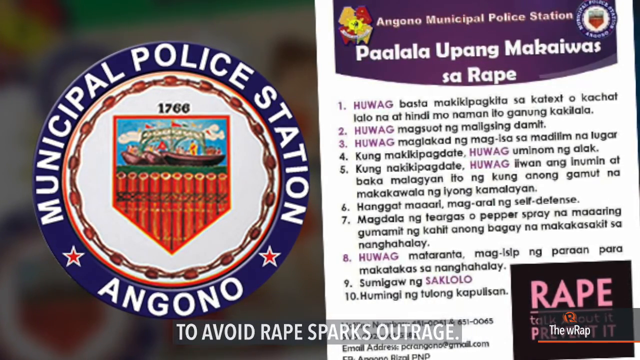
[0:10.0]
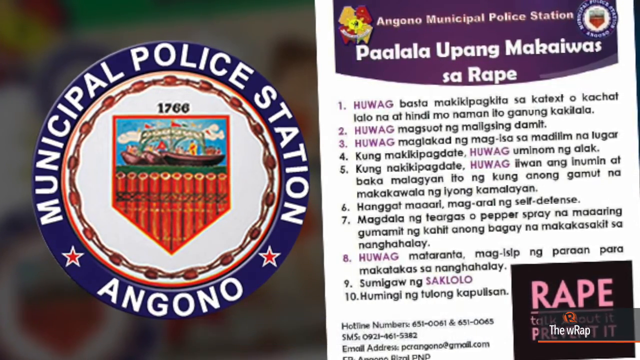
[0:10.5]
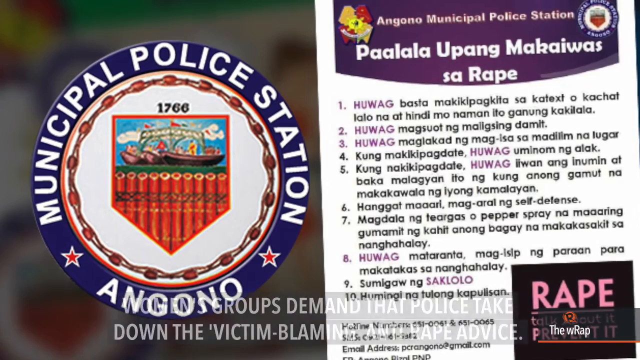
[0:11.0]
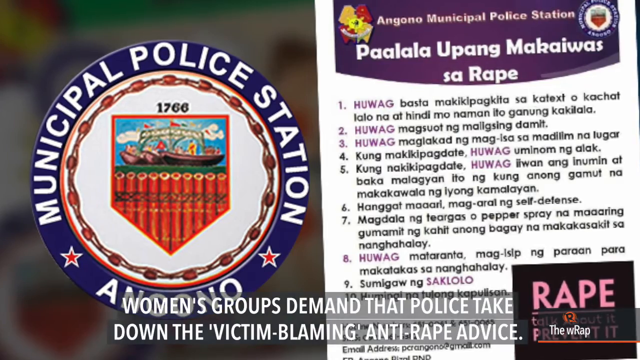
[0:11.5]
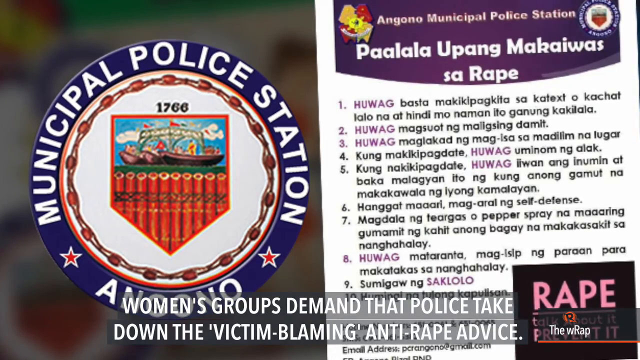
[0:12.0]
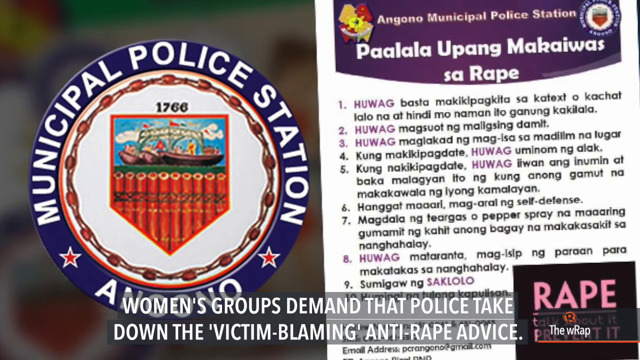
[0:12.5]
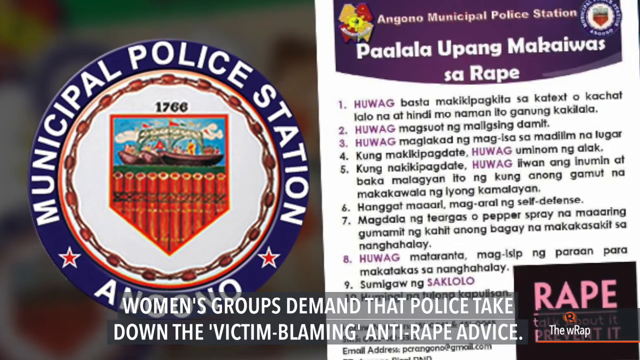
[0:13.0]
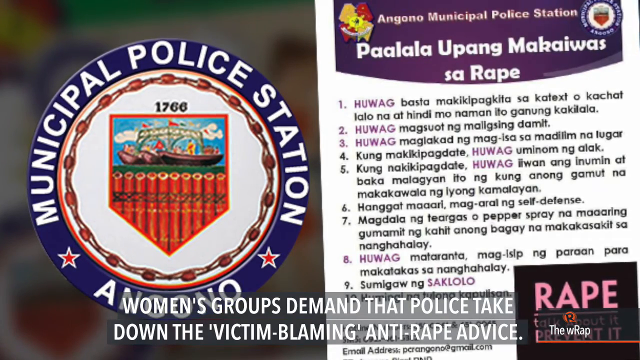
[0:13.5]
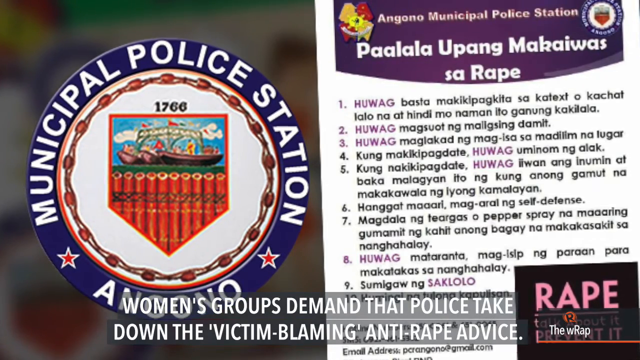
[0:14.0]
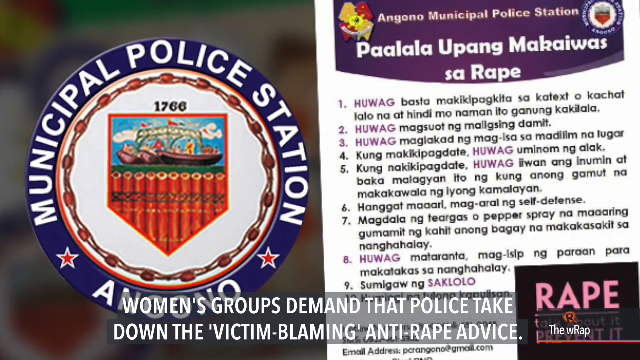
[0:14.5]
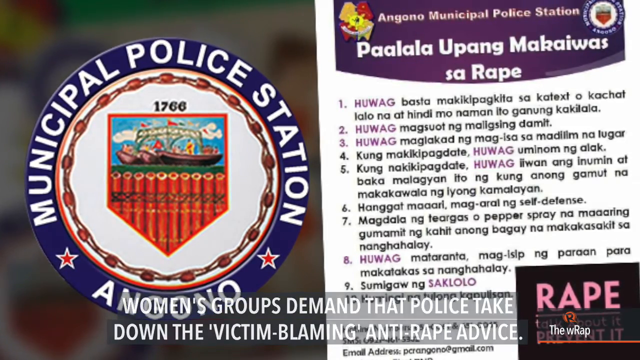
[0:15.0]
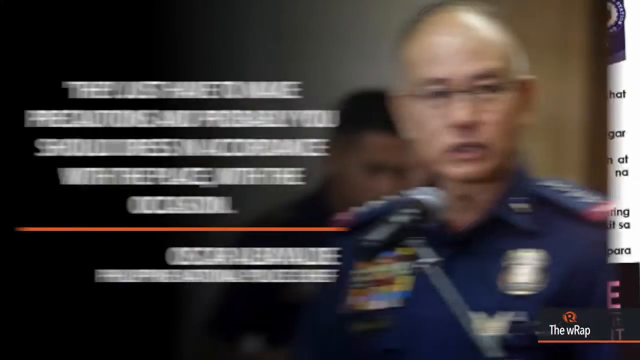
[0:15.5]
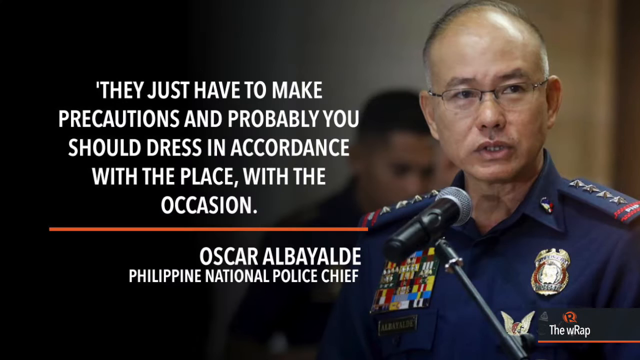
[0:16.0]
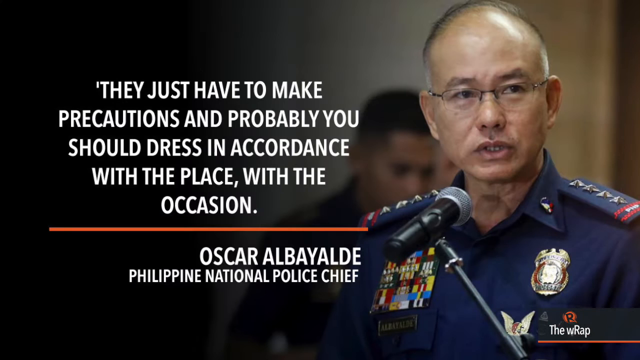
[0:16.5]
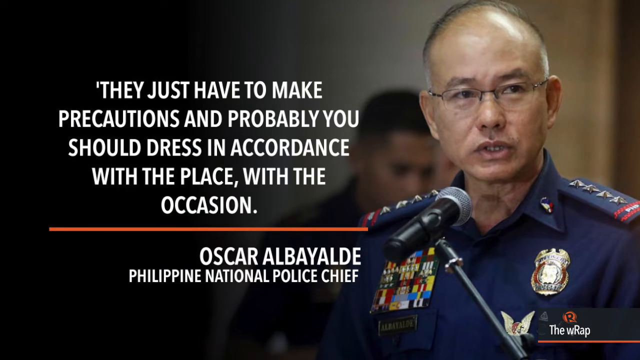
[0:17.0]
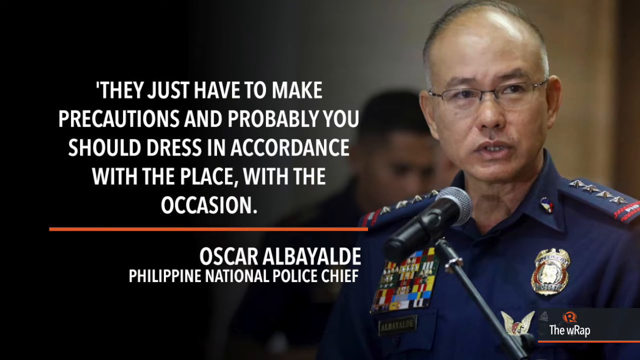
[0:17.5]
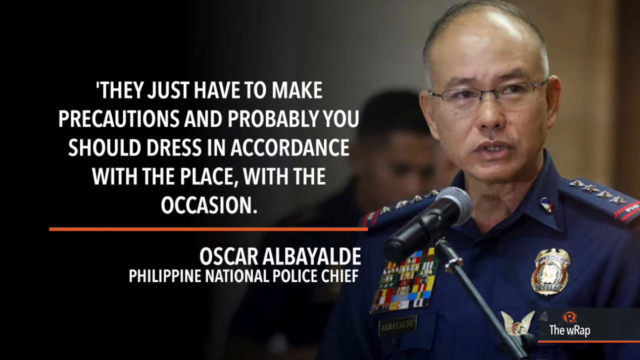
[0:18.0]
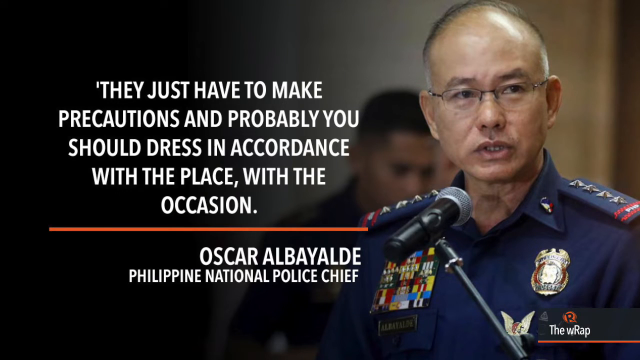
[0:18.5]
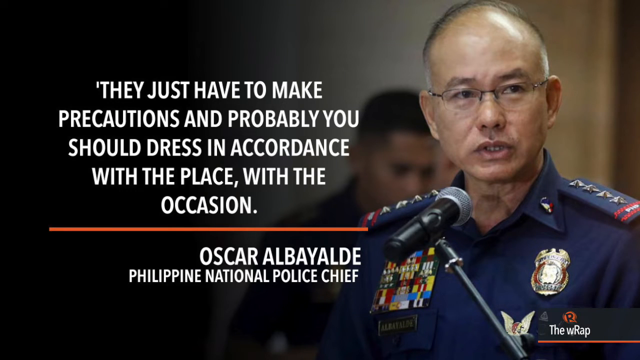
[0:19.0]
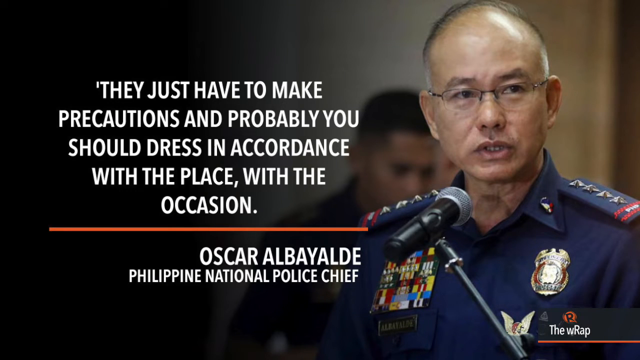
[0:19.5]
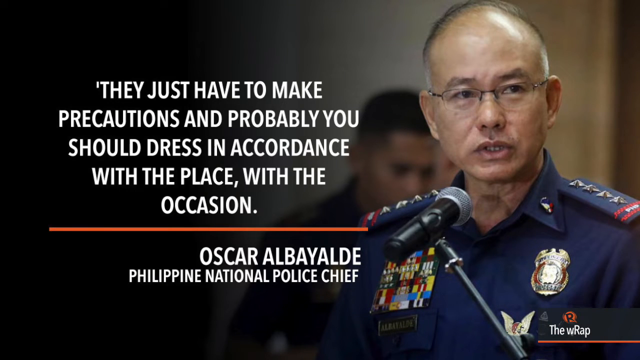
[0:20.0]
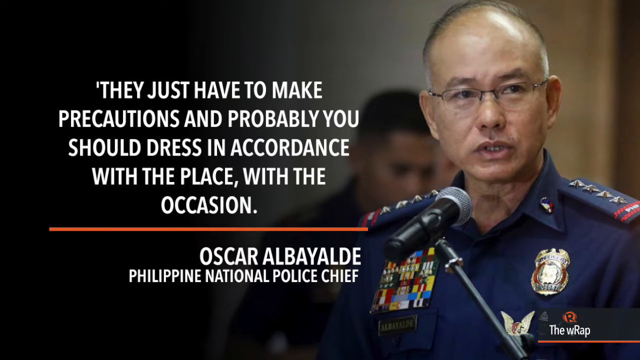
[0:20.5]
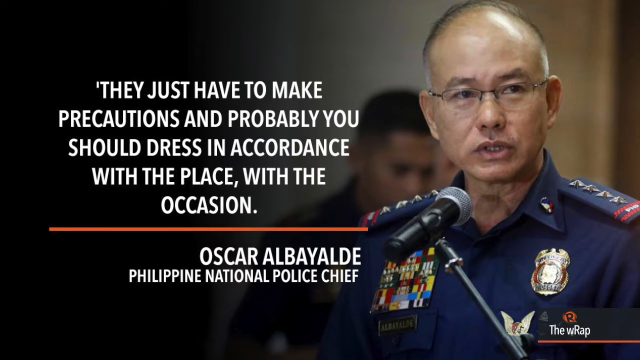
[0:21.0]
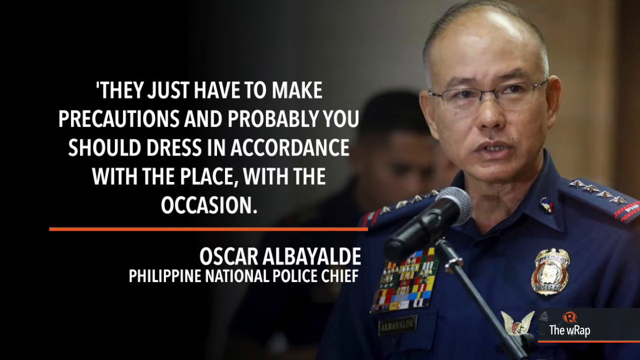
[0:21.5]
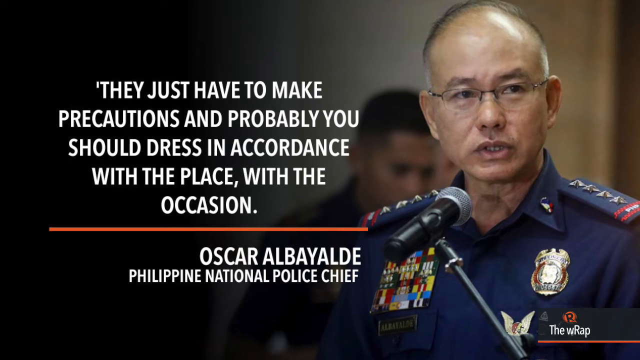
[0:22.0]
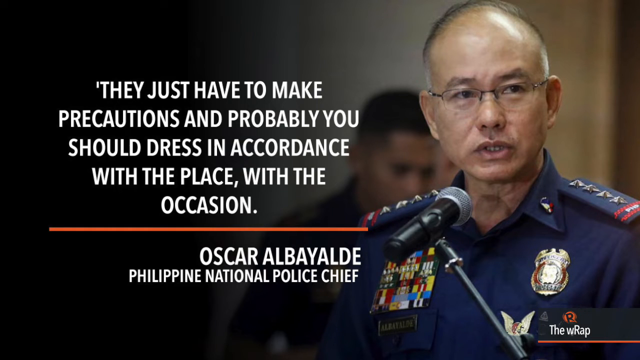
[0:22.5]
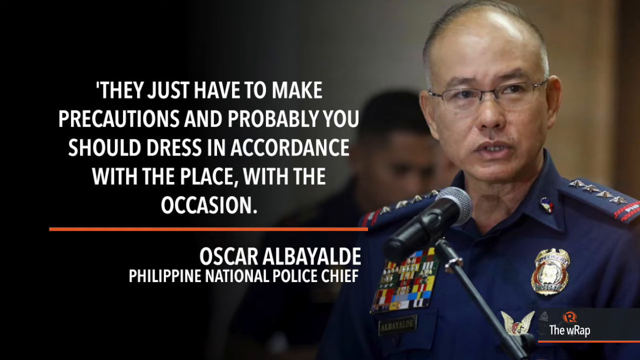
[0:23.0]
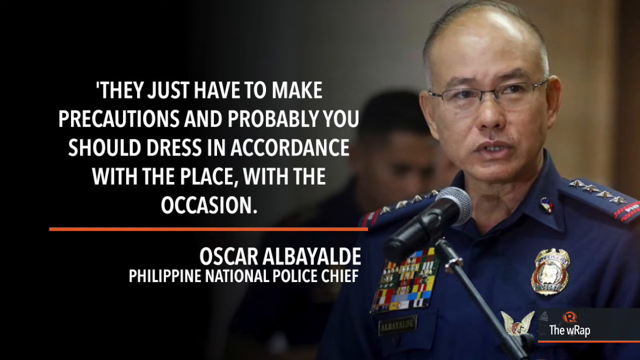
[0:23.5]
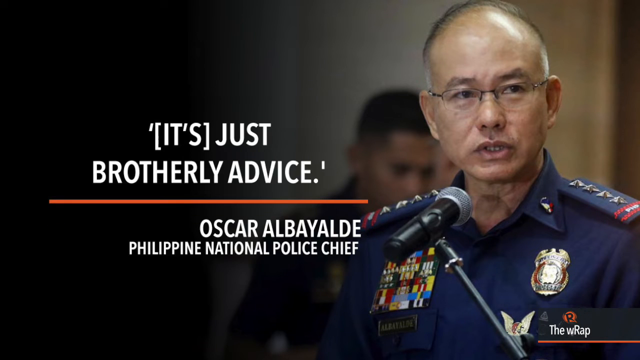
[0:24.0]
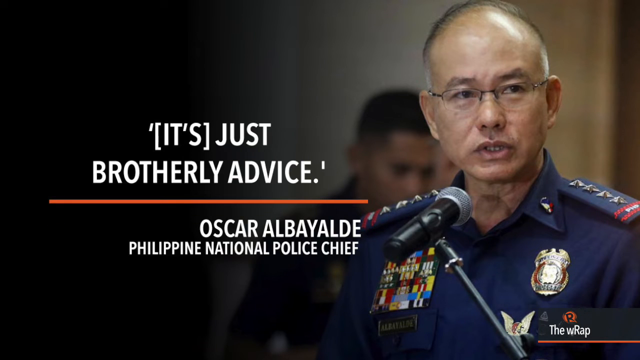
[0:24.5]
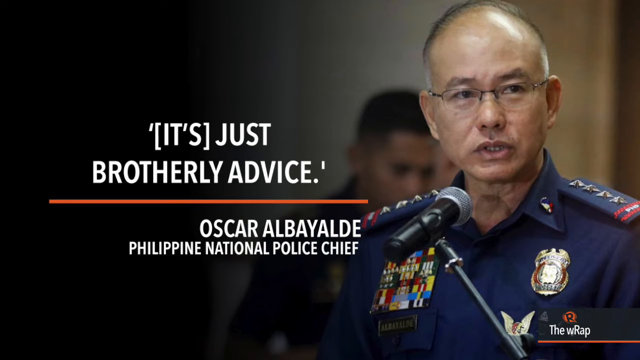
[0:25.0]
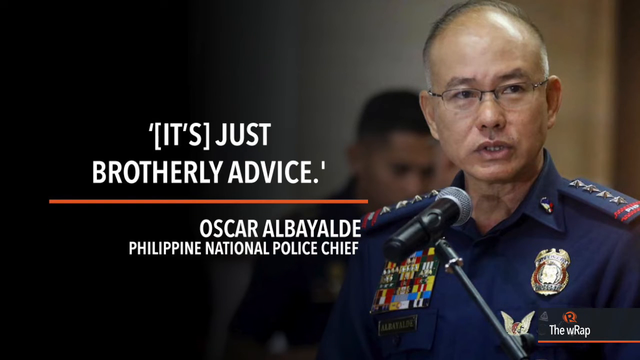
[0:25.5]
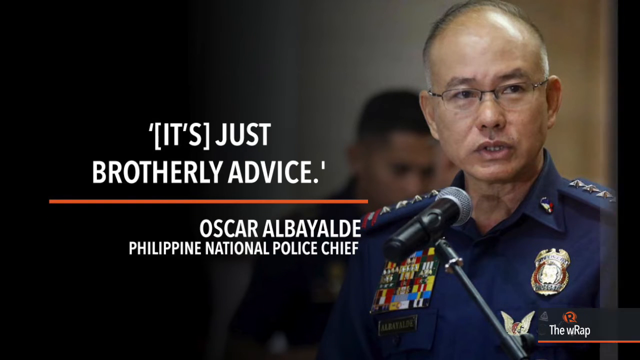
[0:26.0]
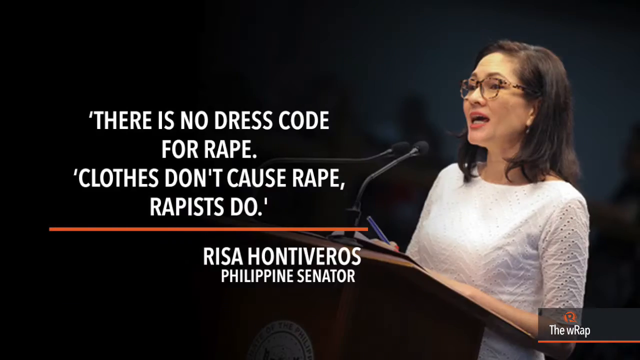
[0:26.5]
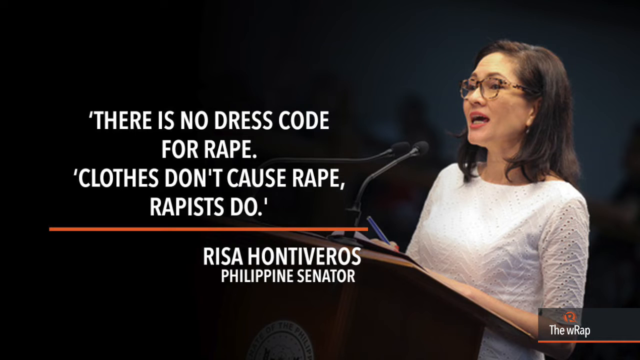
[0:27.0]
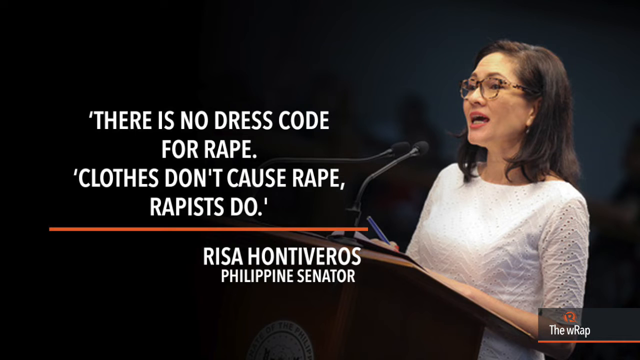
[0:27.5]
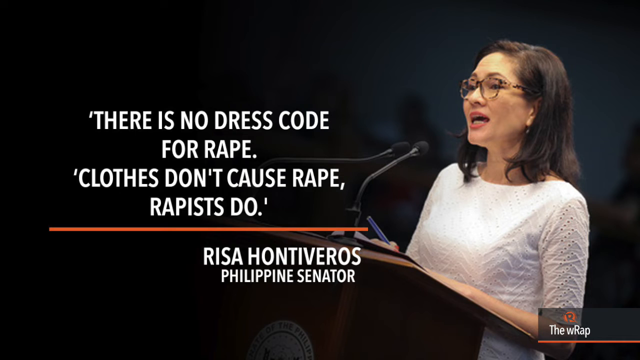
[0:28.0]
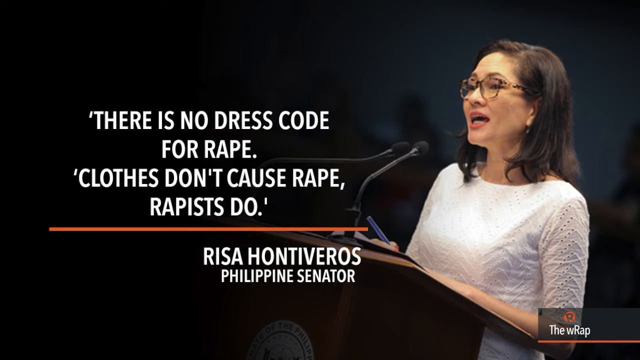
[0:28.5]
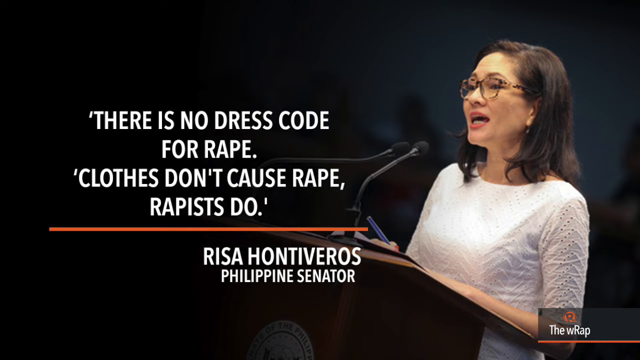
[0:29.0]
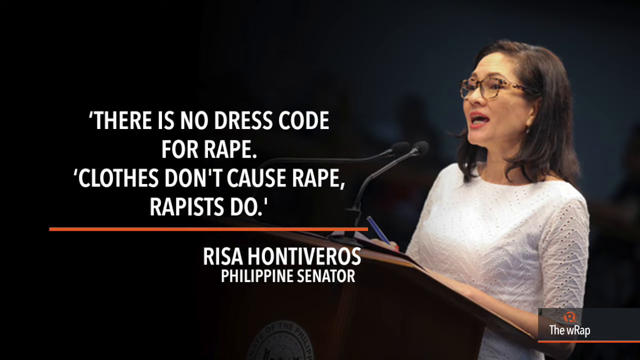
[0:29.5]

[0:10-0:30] A police officer wears a police uniform with a badge on one side of the shirt and different flags on the other side. He wears glasses and is apparently Oscar Mbassi, the Philippine National Police chief.